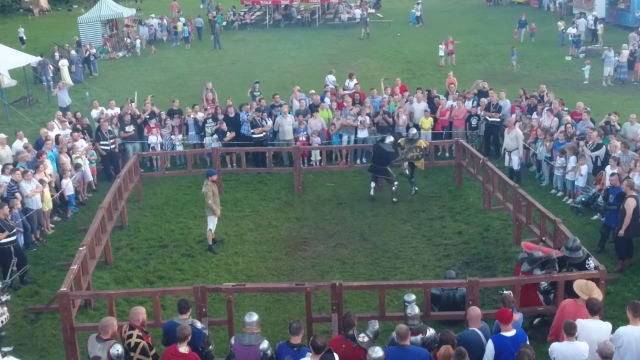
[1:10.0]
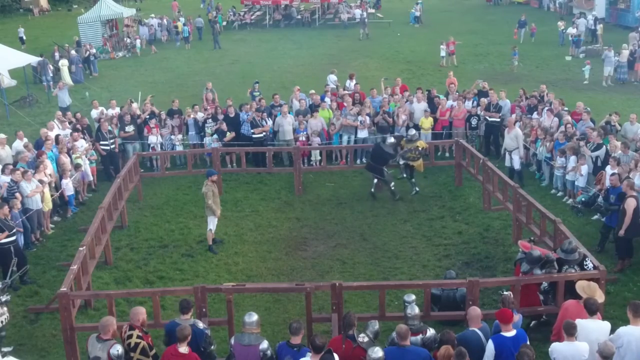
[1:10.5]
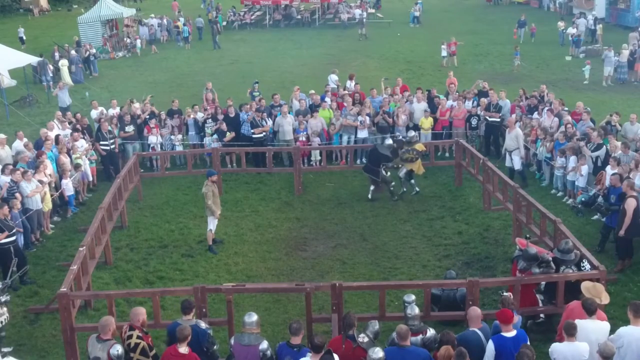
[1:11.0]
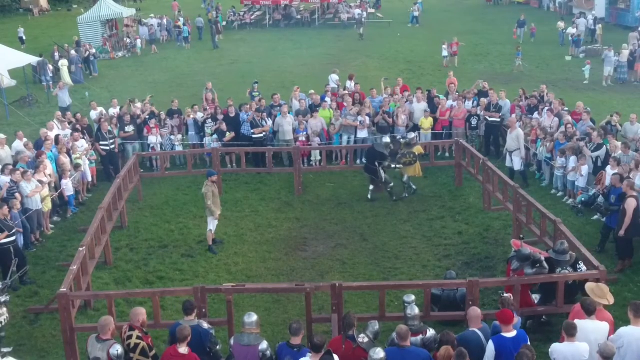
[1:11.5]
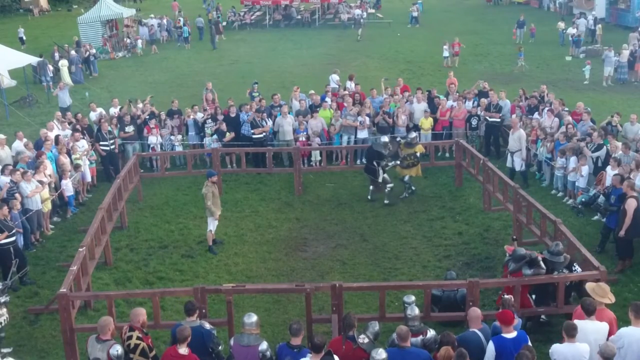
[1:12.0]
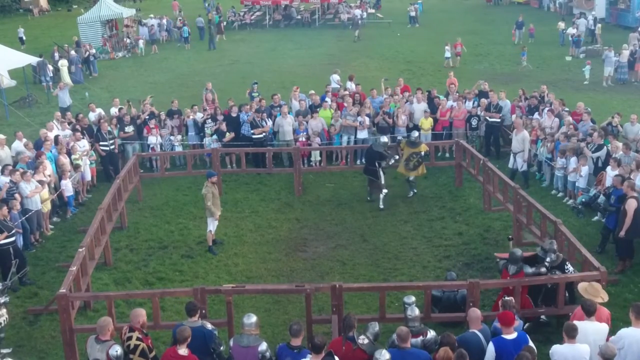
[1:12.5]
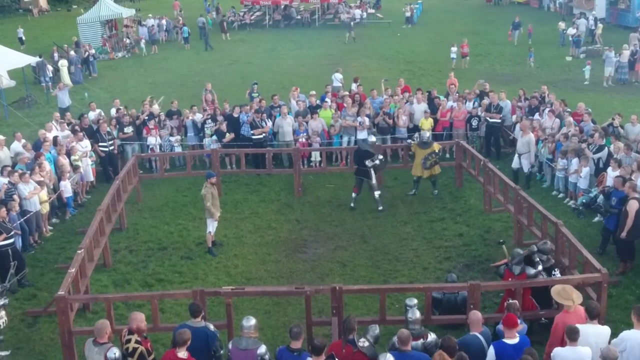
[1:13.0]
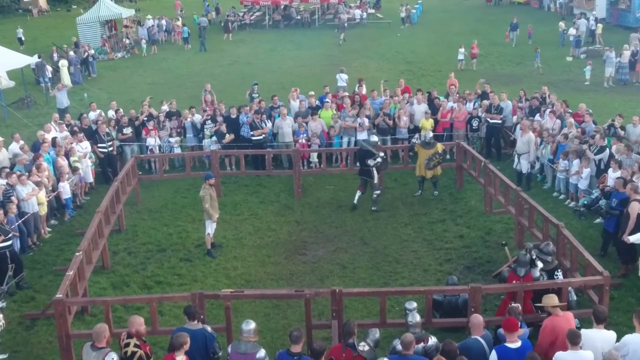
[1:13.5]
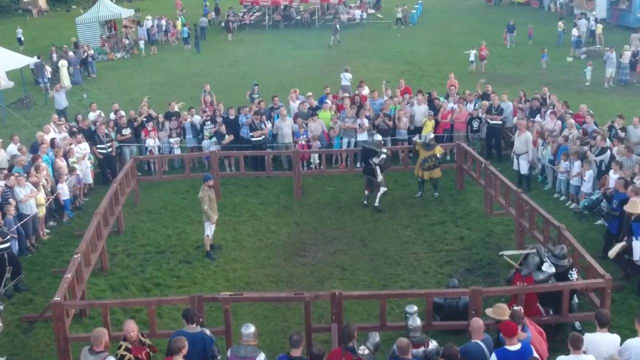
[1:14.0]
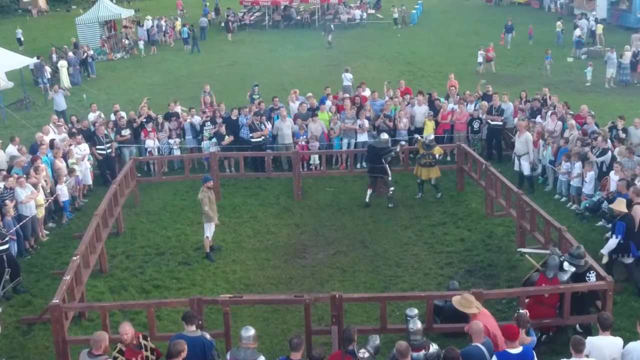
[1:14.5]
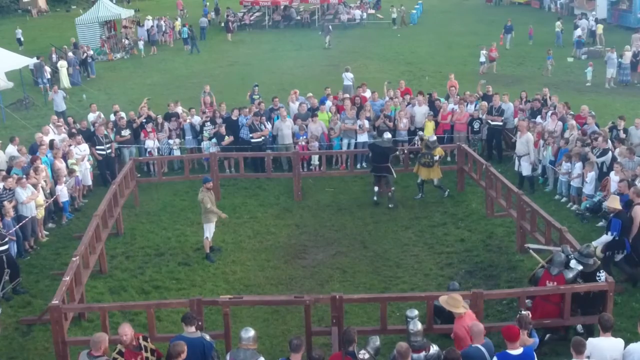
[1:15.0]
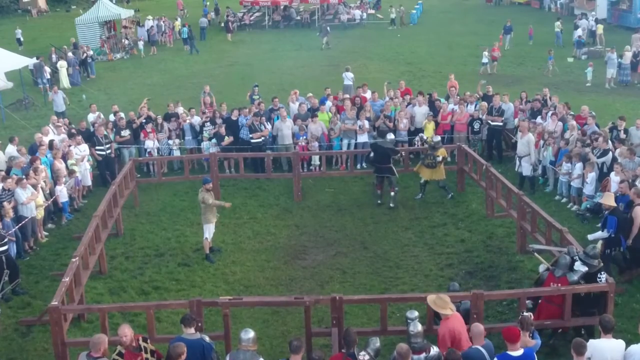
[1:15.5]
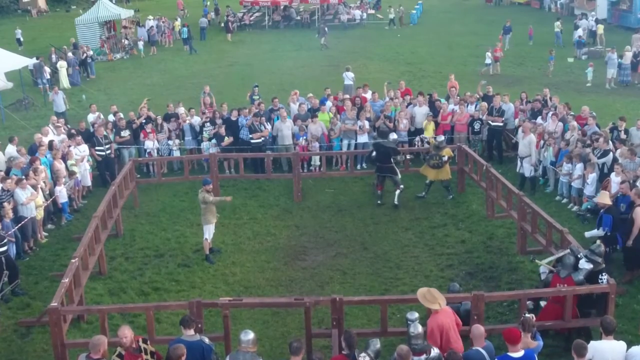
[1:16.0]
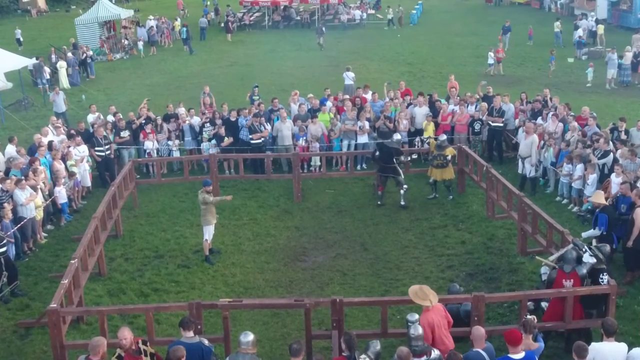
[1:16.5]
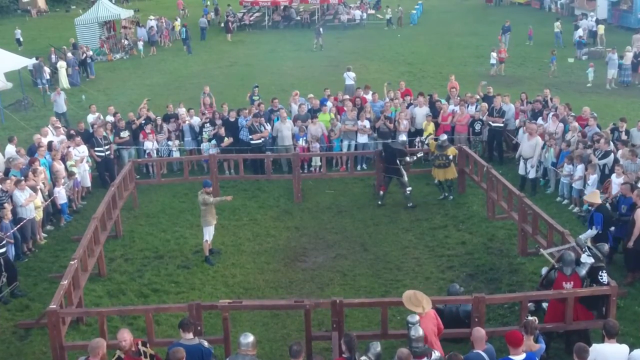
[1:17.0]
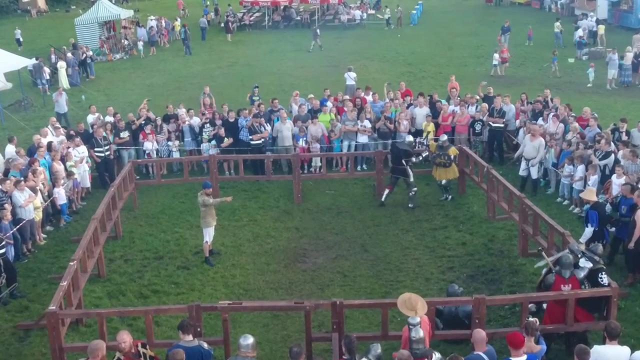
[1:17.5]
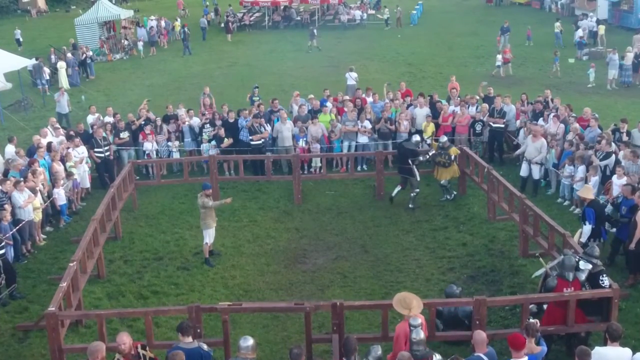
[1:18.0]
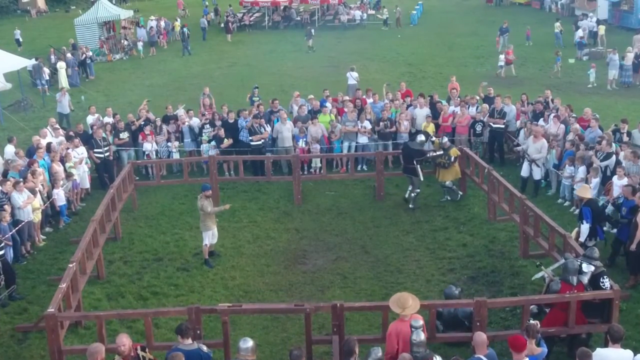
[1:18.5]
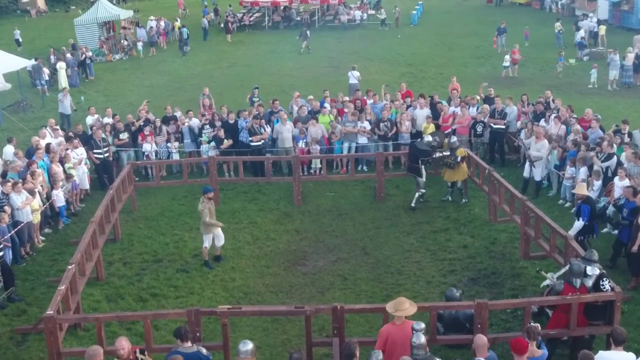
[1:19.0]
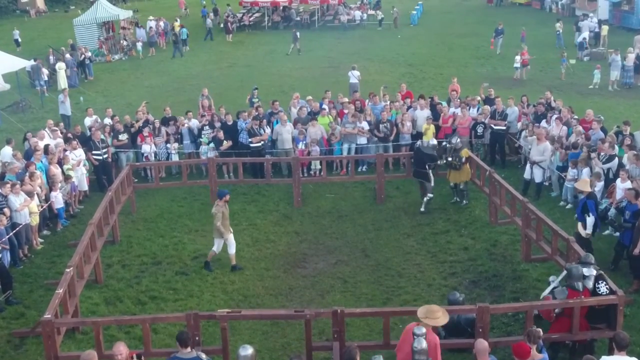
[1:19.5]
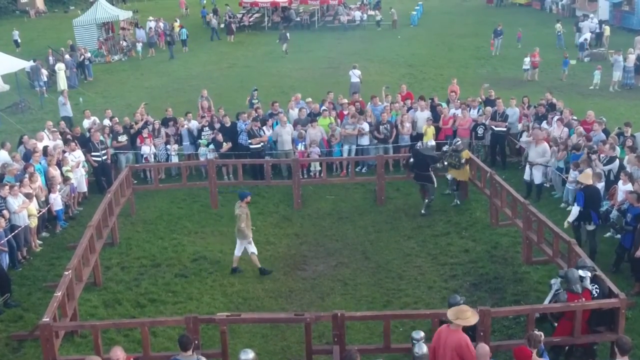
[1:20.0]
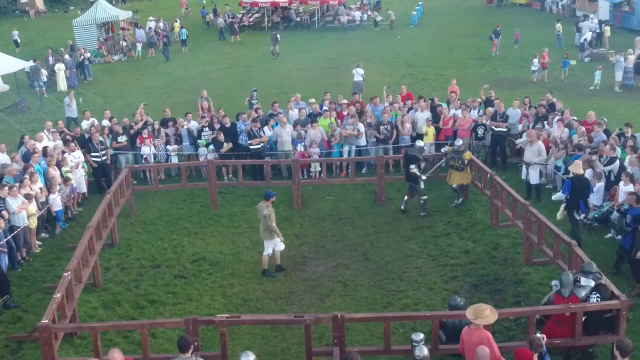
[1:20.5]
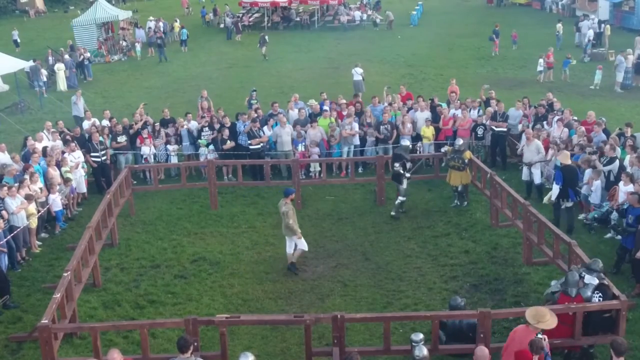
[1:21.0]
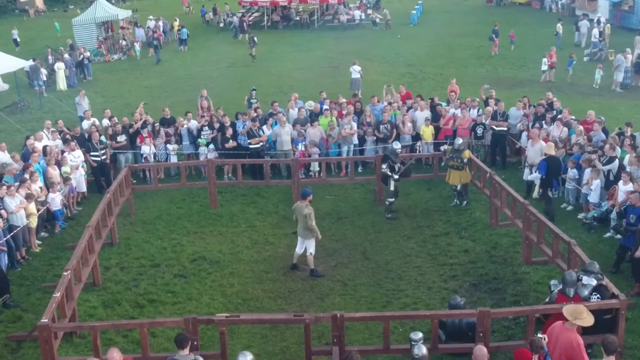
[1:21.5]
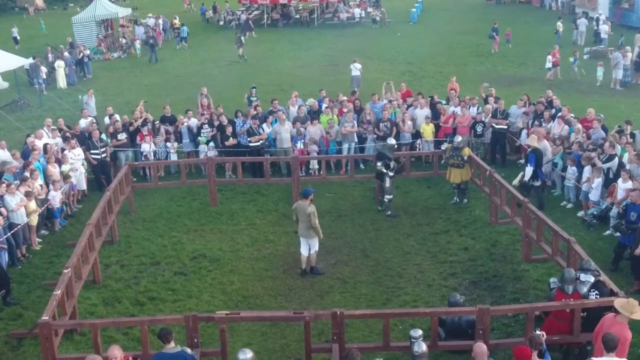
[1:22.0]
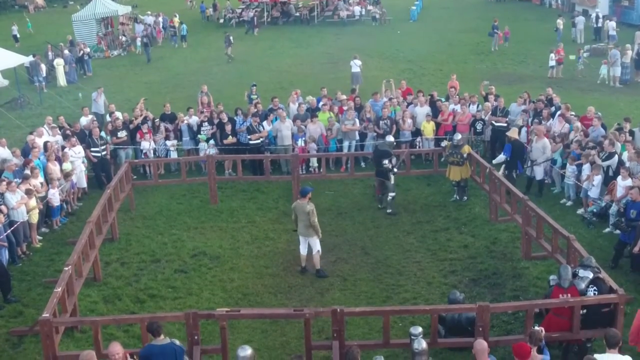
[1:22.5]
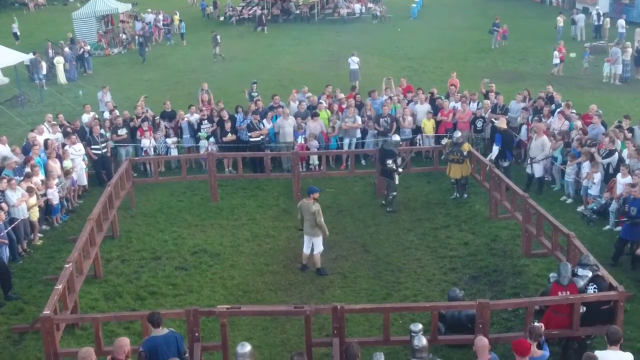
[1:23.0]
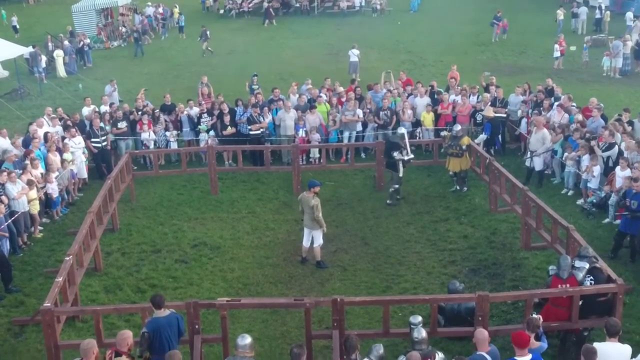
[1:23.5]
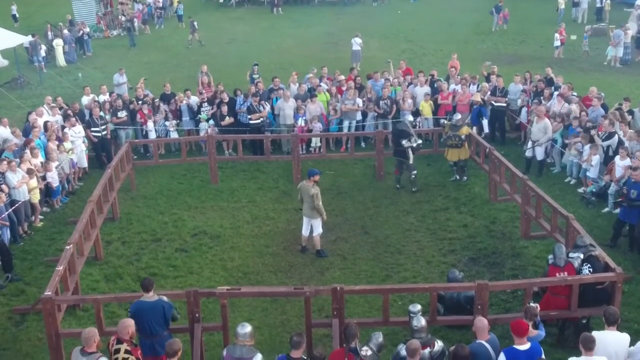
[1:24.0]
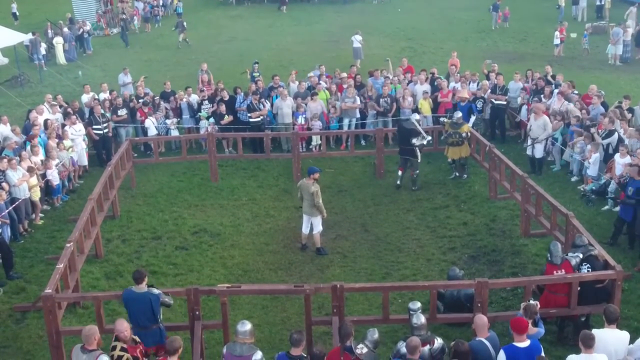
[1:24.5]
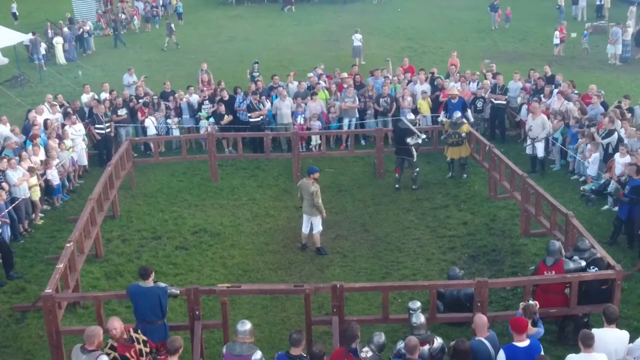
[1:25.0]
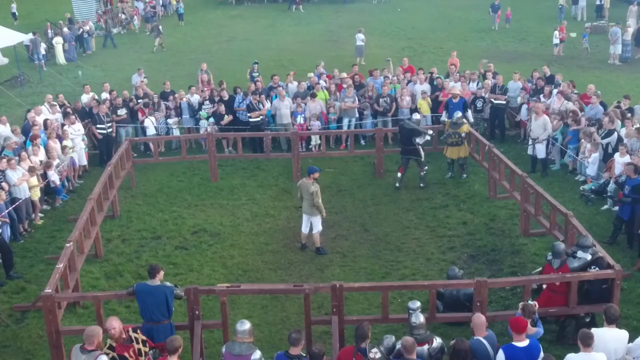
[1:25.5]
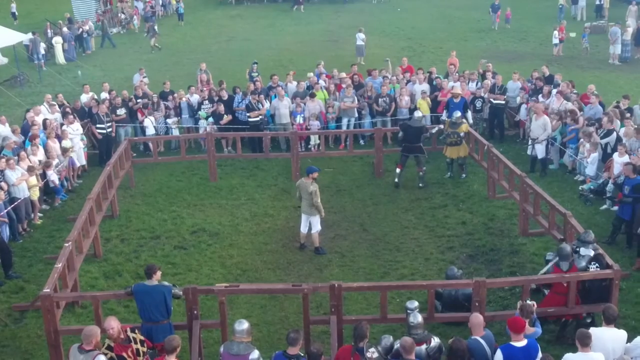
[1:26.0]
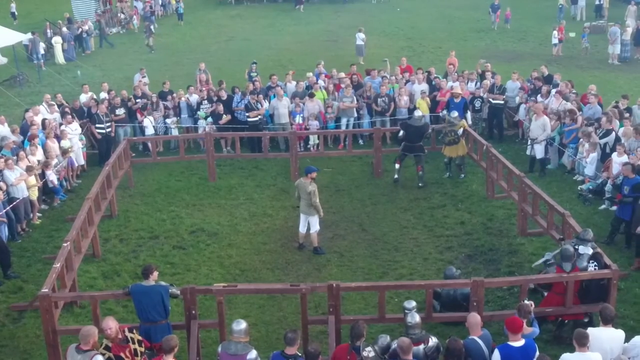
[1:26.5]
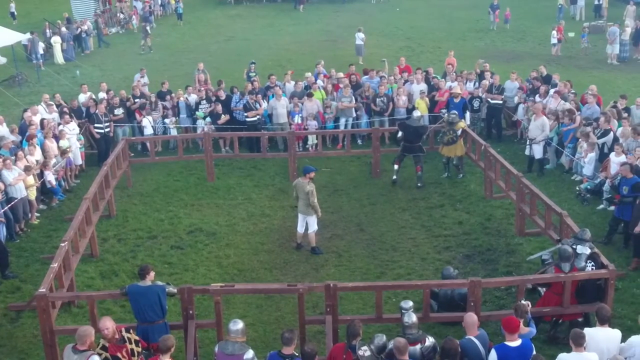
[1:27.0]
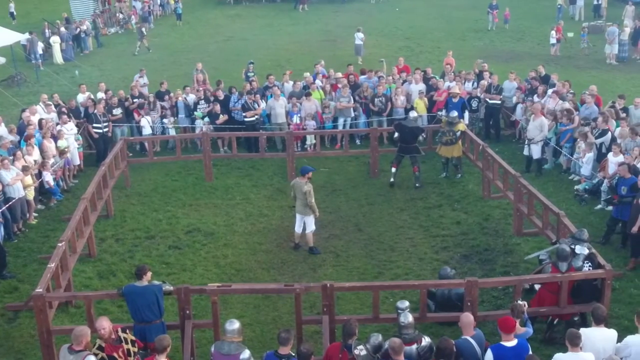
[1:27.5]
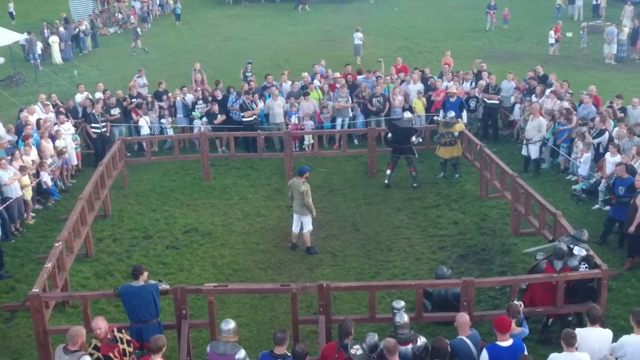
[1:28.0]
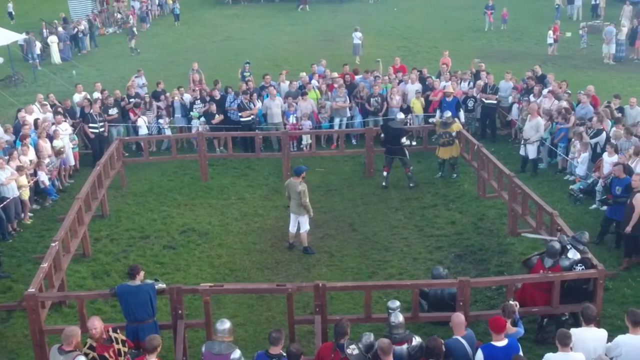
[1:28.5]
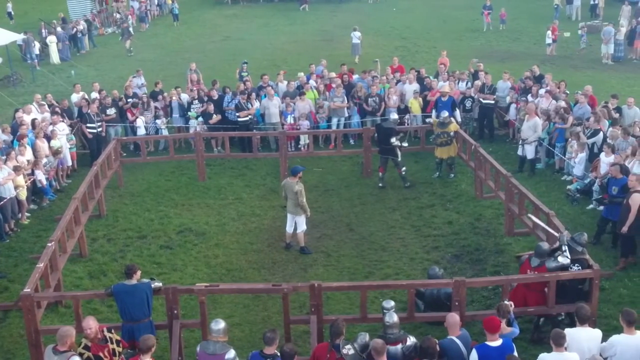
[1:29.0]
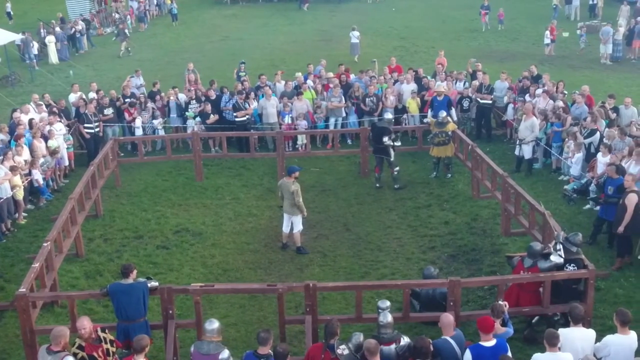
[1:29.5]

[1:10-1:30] The fighter in blue and the fighter in yellow engage each other again in the top right corner. The two in the bottom right corner continue to grapple and push at each other, both with their backs to parts of the fence. The non-combatant is now standing in the center of the ring. The fighters in blue and yellow pause for a moment, then the fighter in dark blue takes a swing, which appears to be blocked. The fighter on the ground is still in the arena but is not engaging in the fight. The fighters in the bottom right keep struggling against one another, with the one in black appearing to push. The one in red seems to have gotten his sword arm stuck and cannot use it to attack. As the scene ends, both groups of fighters are engaged in the corners of the arena.